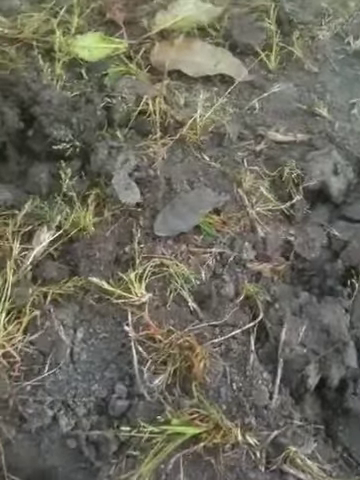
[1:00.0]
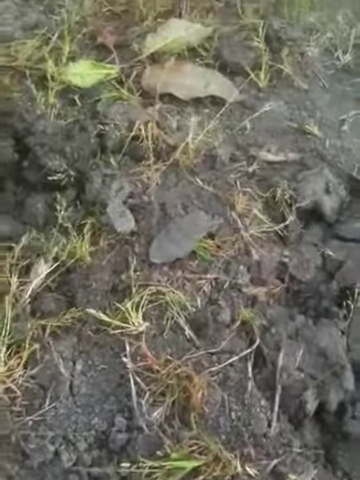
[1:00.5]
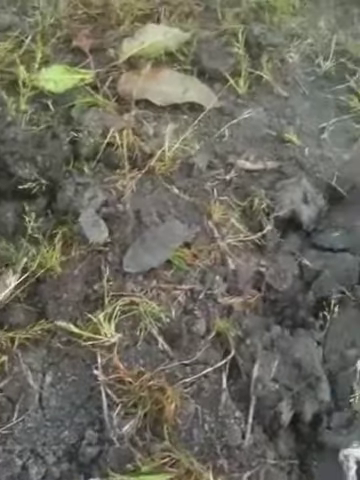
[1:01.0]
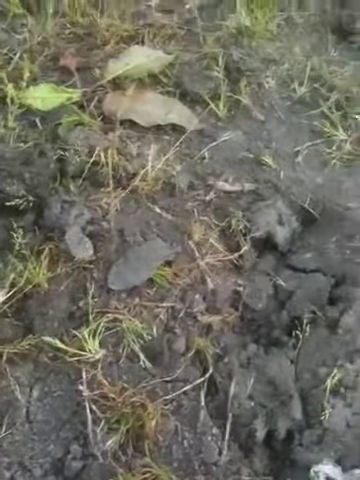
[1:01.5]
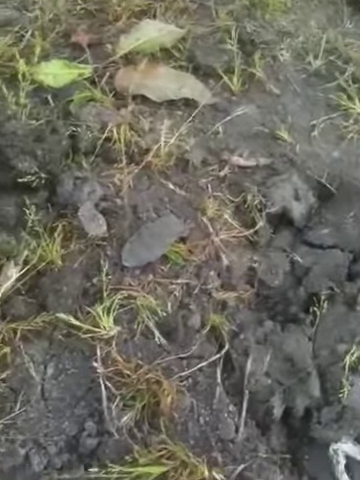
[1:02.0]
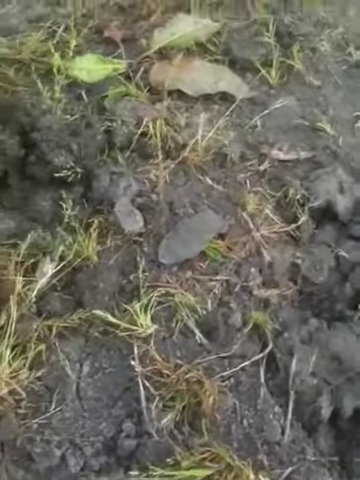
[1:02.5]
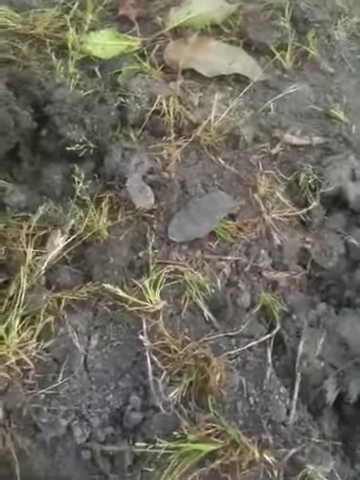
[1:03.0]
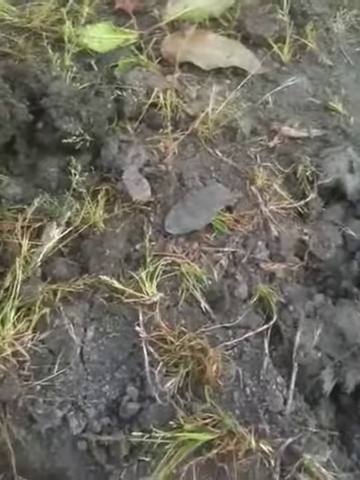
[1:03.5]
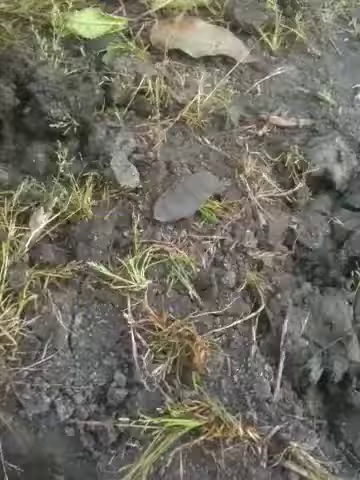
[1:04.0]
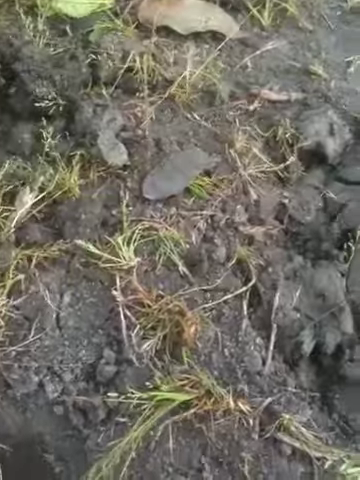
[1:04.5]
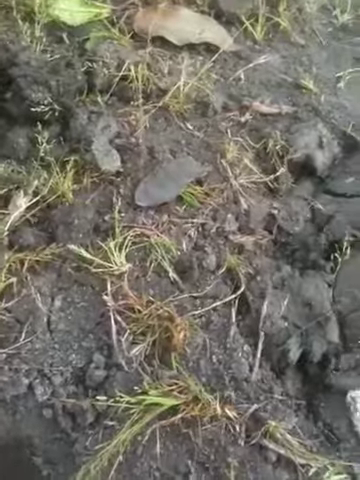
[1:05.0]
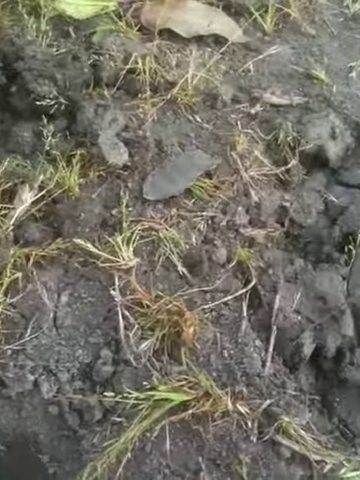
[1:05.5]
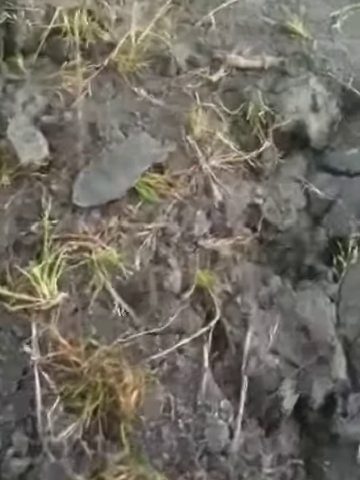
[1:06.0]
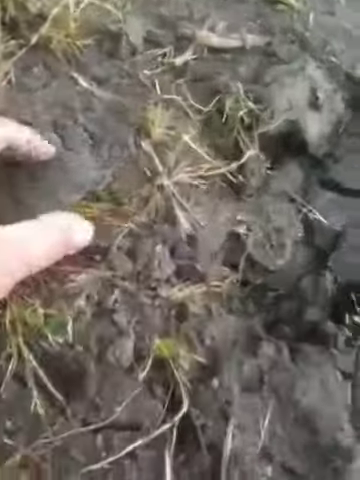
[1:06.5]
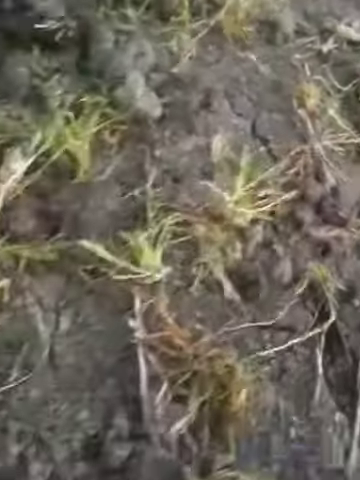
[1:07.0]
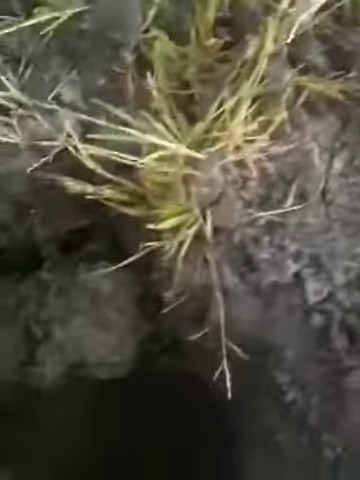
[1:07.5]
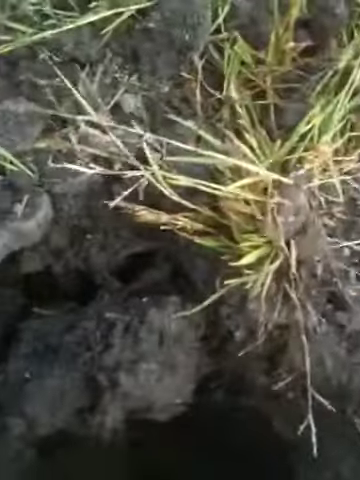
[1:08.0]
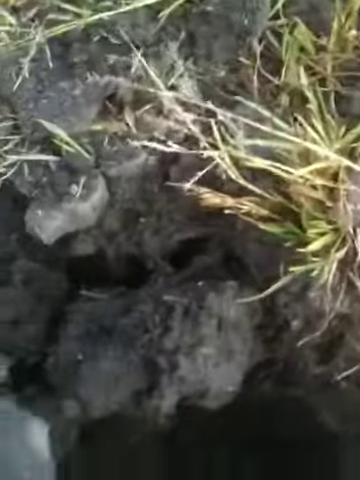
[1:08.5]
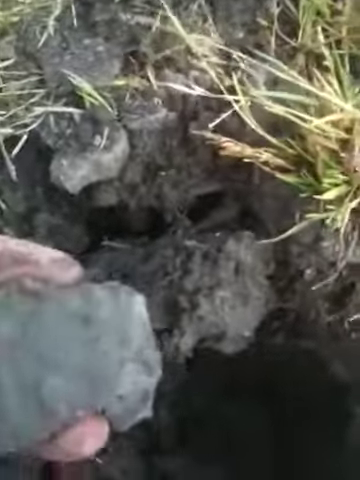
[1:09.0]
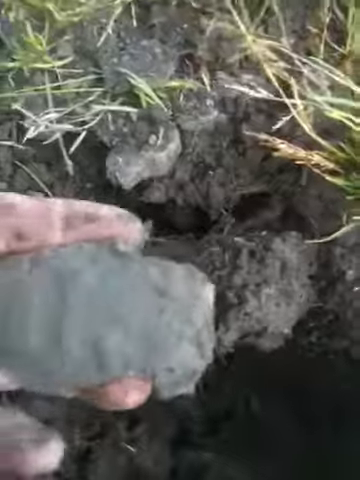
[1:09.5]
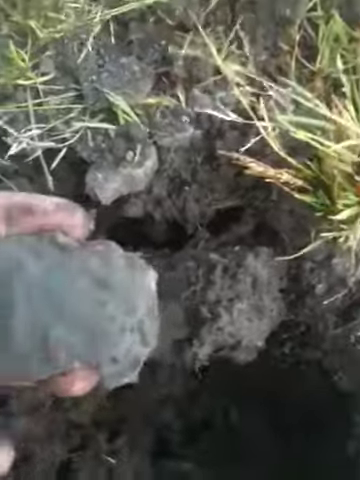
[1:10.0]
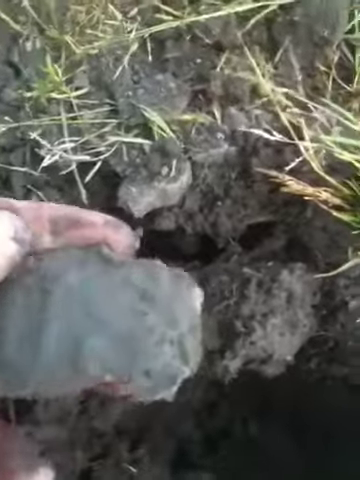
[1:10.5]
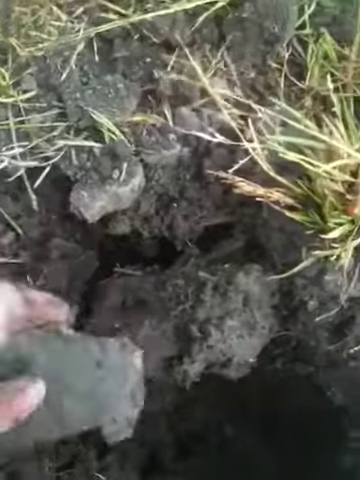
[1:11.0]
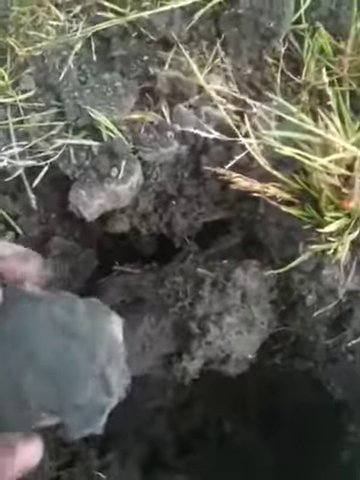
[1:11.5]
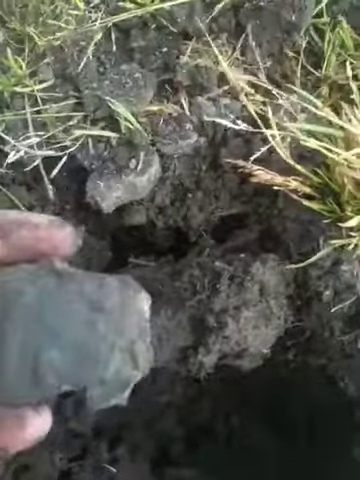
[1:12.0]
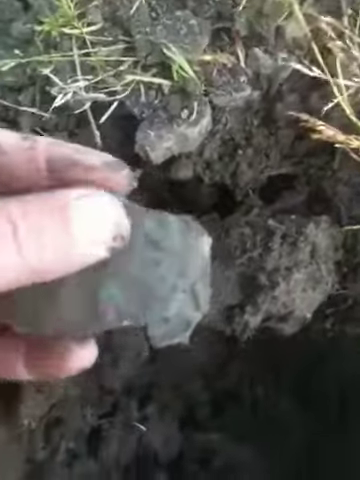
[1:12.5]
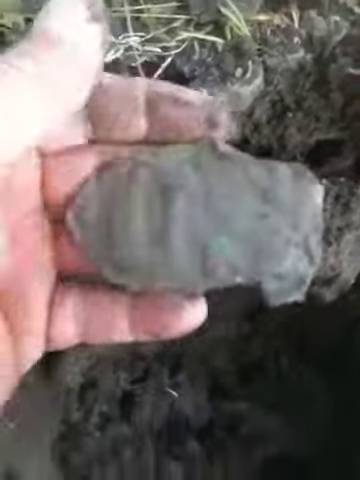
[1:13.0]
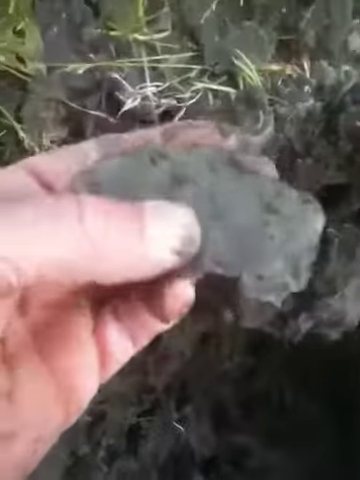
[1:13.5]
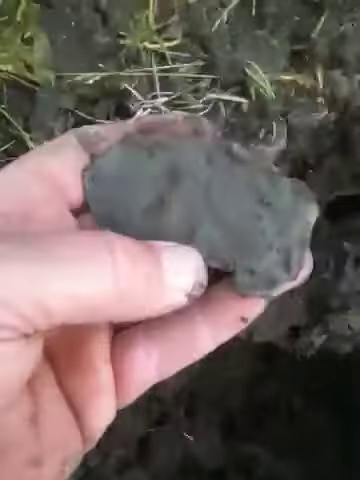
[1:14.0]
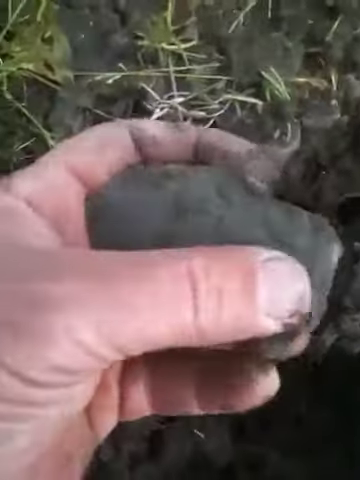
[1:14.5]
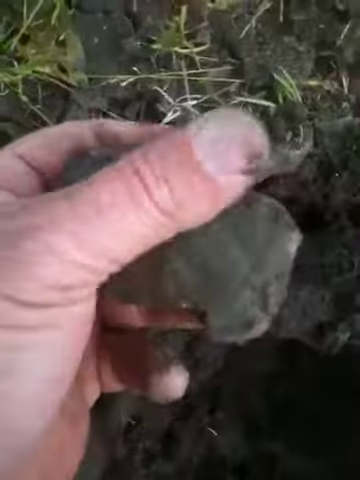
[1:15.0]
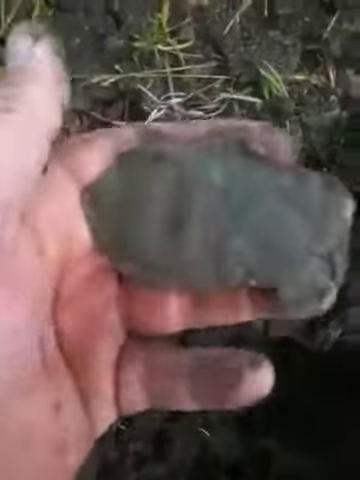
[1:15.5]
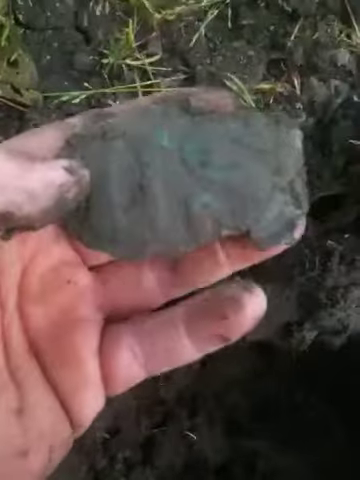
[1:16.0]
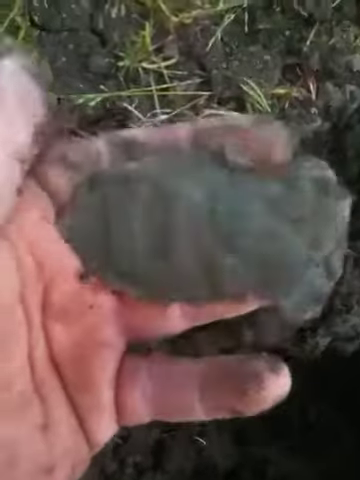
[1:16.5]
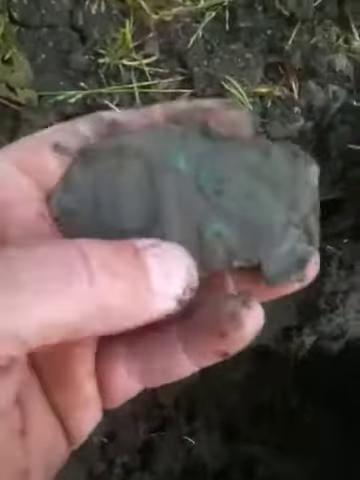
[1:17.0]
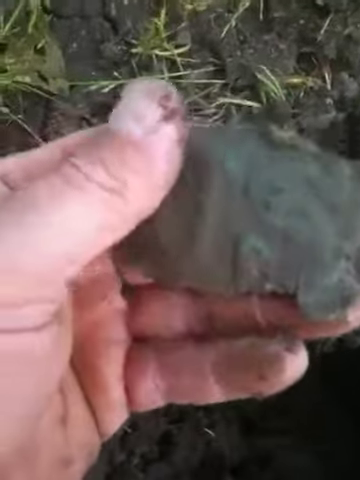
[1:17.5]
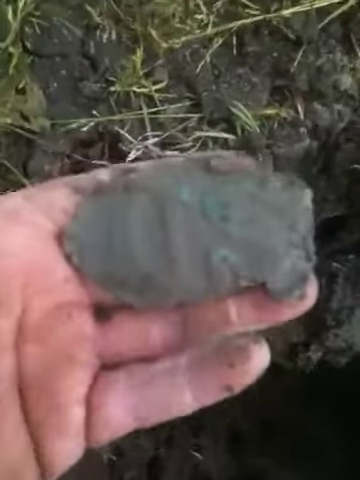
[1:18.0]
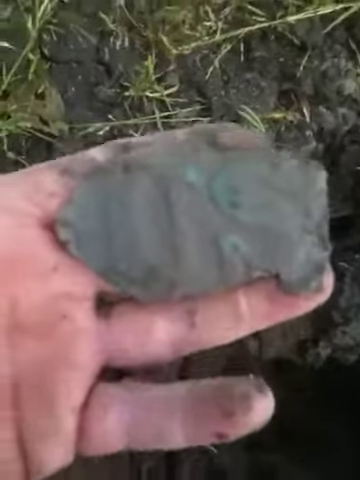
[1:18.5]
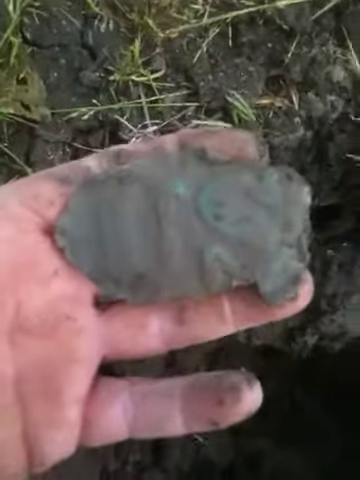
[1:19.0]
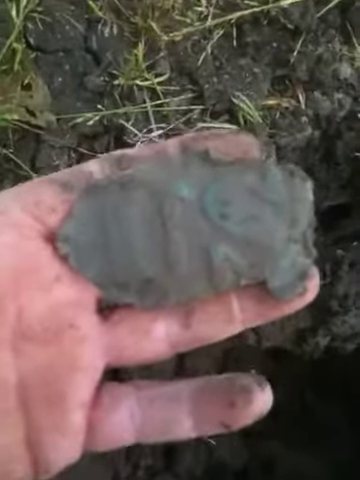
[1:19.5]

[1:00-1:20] A vertical shot from a phone at a standing angle shows a slightly greenish and black, oblong-shaped rock in the center of the screen. It is slightly covered in mud and surrounded by dirt and mud, with rocks and leaves interspersed around it and clumps of mud on the left and right sides of the screen. The camera angle is somewhat shaky and stilted. The camera slightly moves in toward the rock as a white male's hand reaches in and grabs it. The camera then slightly goes over to the left, showing a deeper hole about a foot deep, before the hand moves the piece of rock back into view. Both the hand and the rock are muddy. The coloration and pattern of the mineral are visible in greater detail: it appears to be turquoise and somewhat multicolored, with a slight translucence. The hand rotates it around to the other side while wiping off more mud built up around the oblong object, and the object is then shown in the middle of the screen.